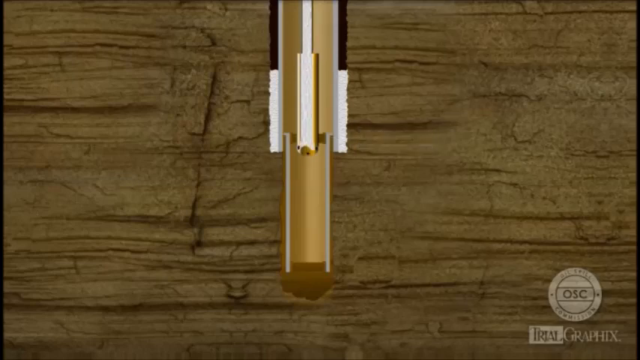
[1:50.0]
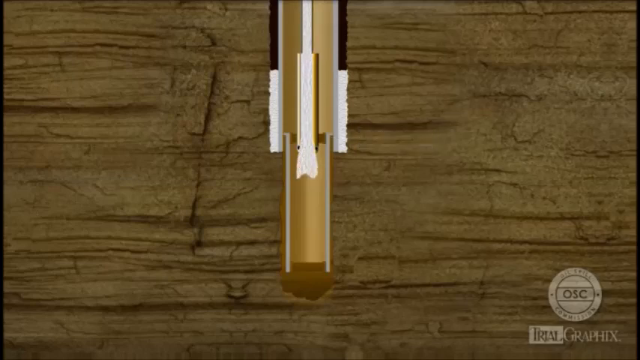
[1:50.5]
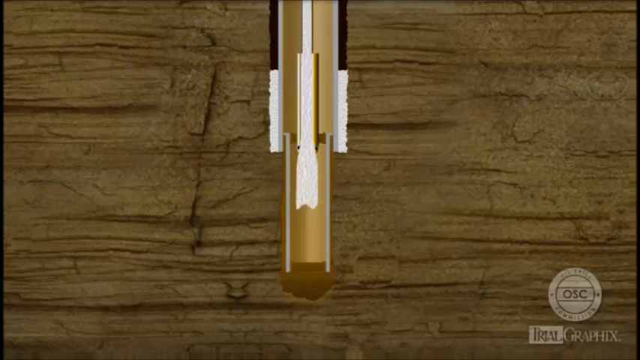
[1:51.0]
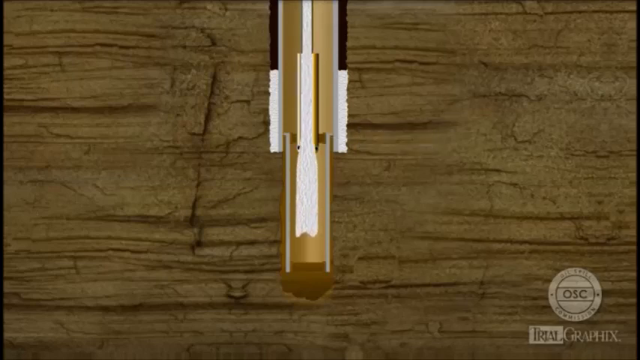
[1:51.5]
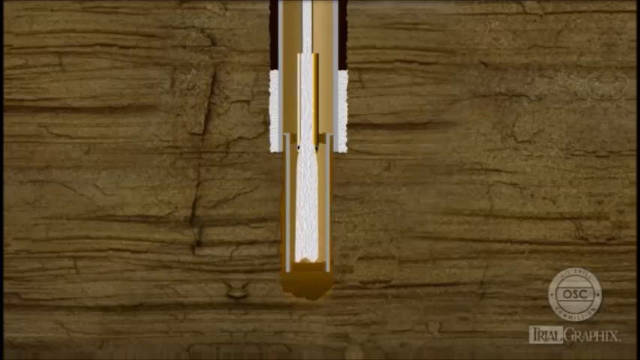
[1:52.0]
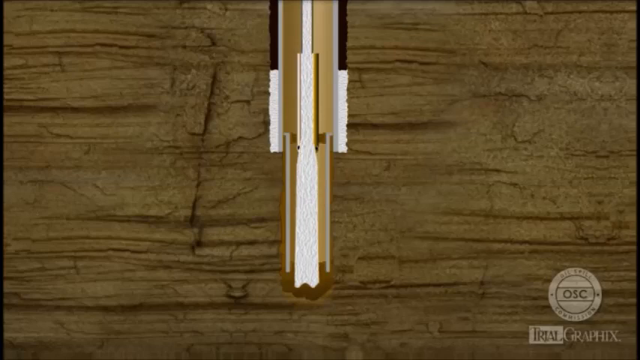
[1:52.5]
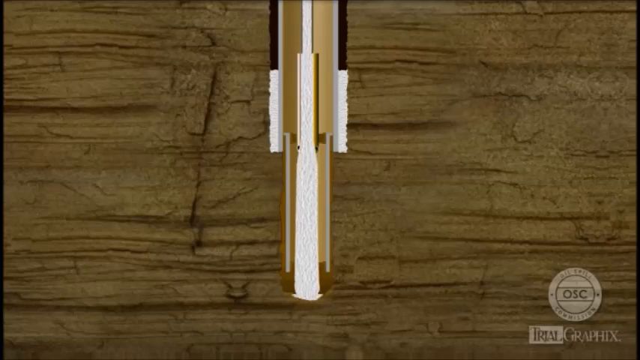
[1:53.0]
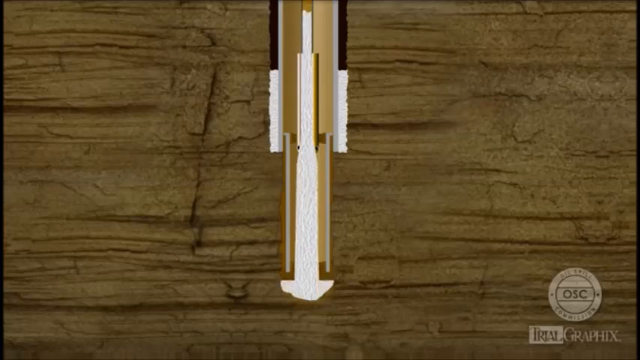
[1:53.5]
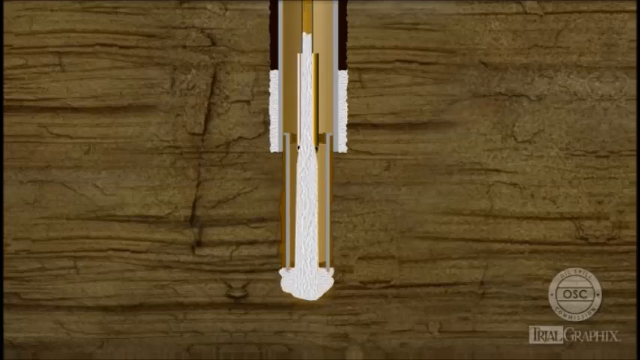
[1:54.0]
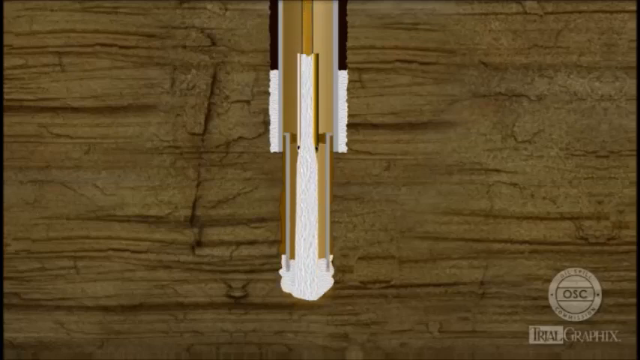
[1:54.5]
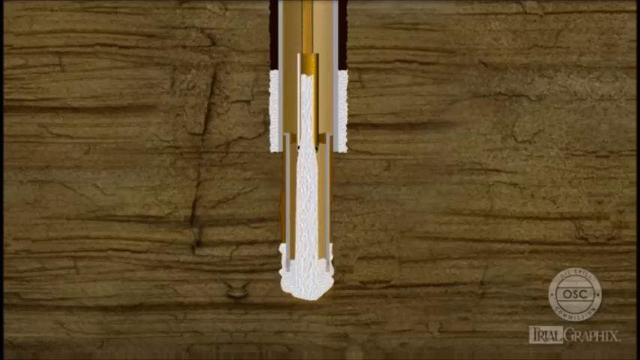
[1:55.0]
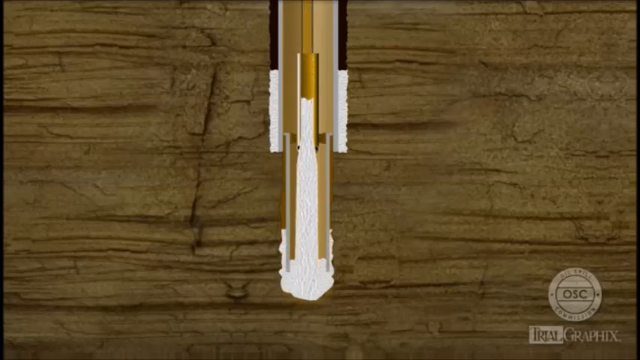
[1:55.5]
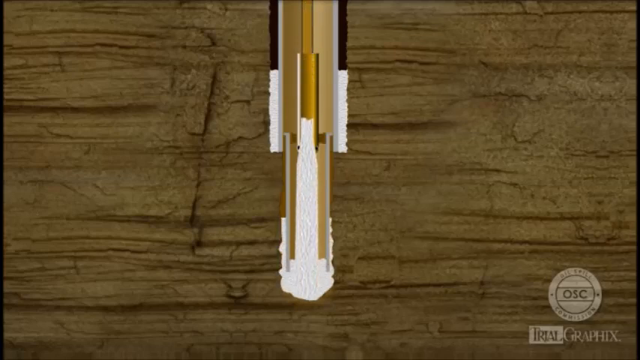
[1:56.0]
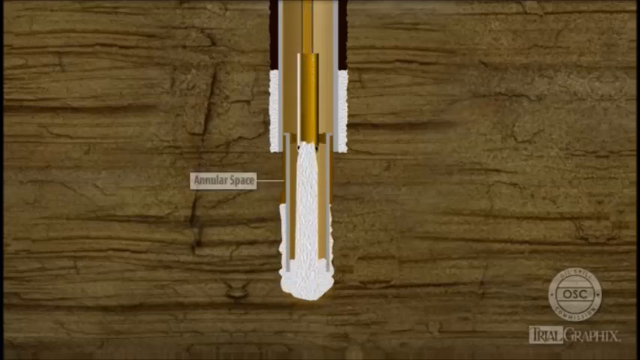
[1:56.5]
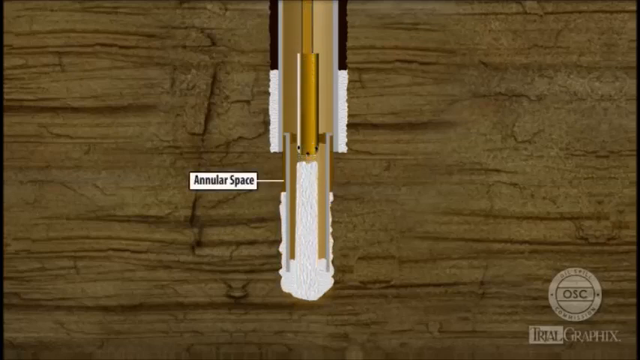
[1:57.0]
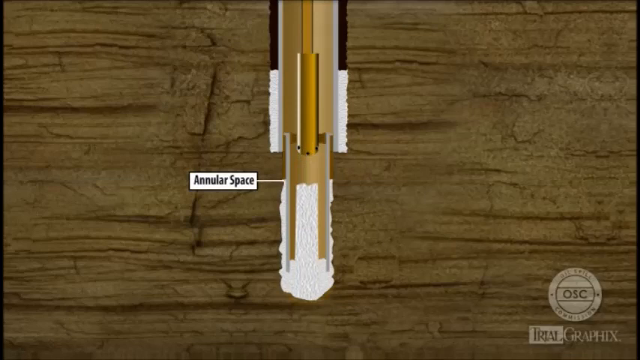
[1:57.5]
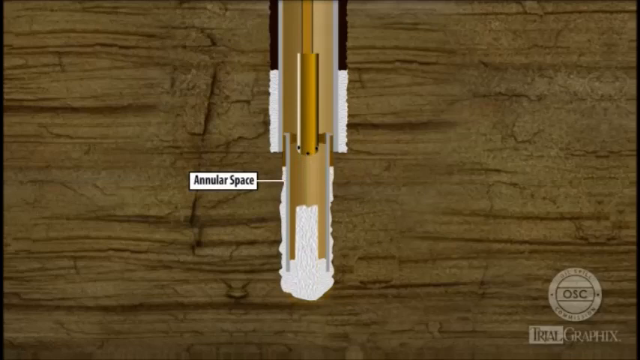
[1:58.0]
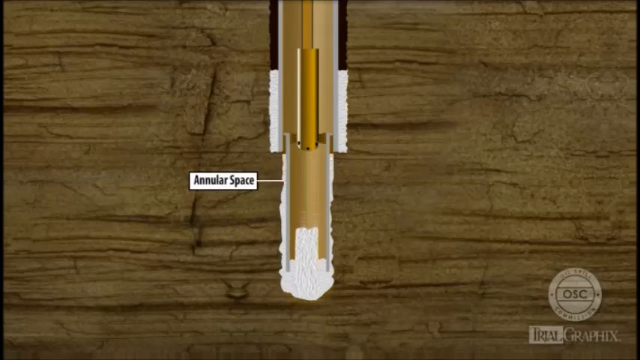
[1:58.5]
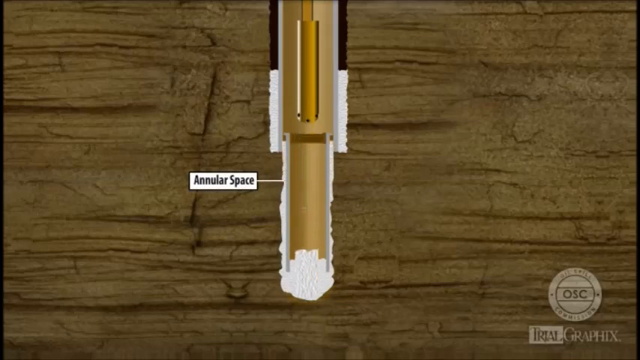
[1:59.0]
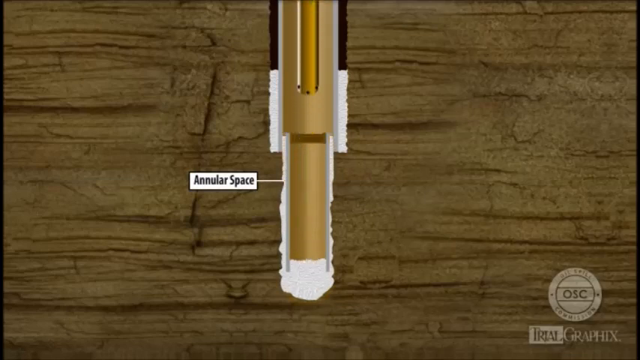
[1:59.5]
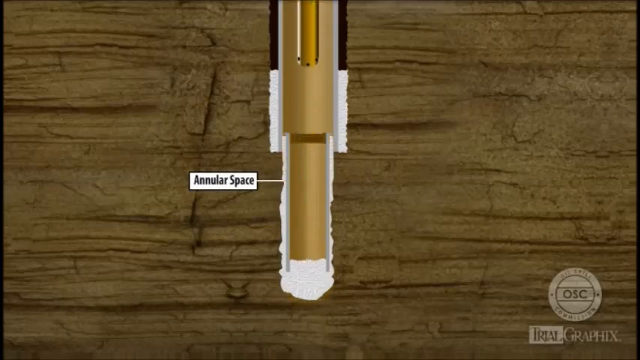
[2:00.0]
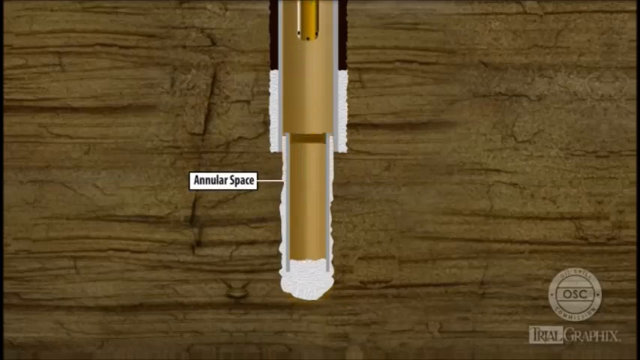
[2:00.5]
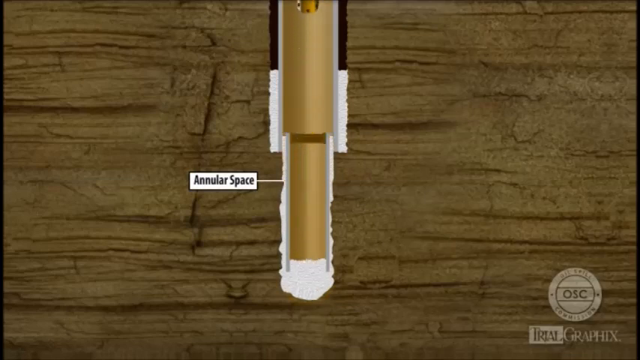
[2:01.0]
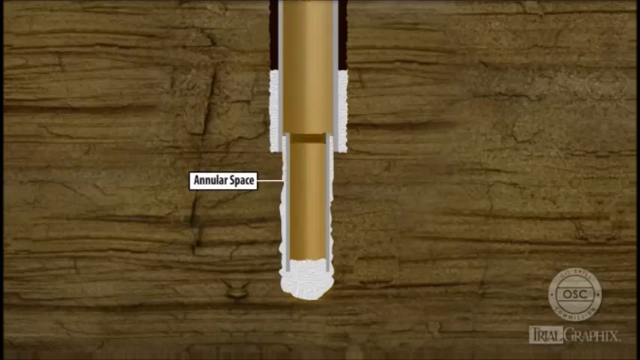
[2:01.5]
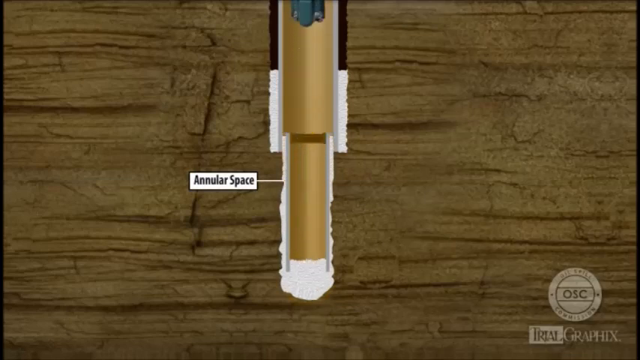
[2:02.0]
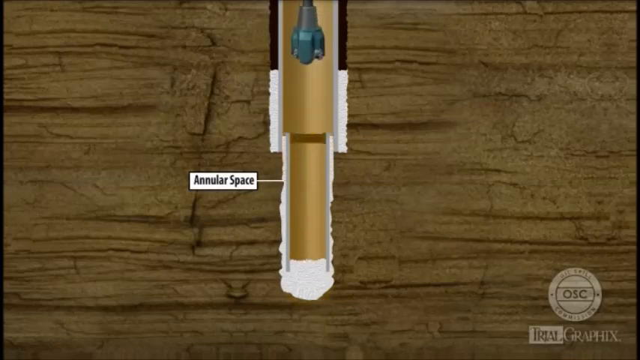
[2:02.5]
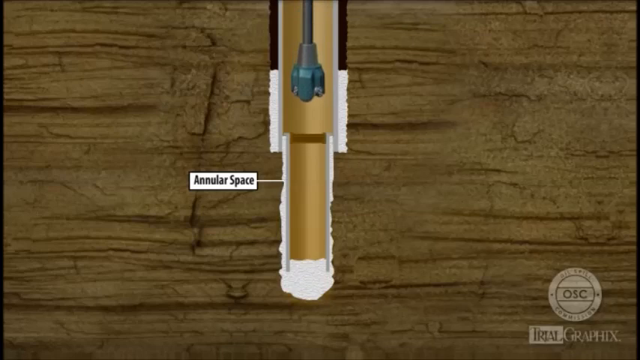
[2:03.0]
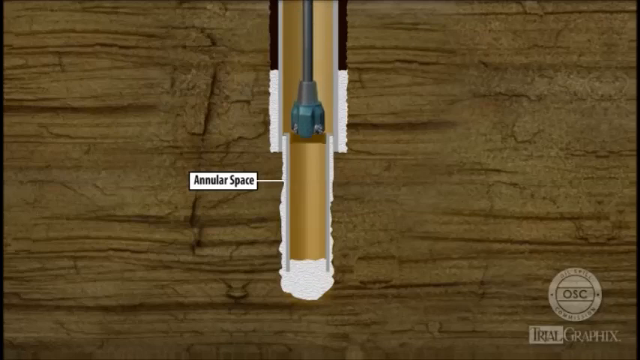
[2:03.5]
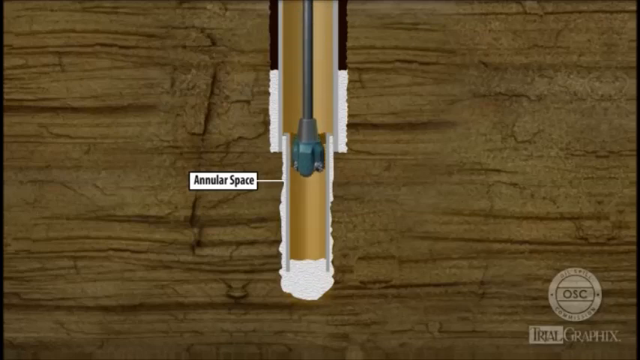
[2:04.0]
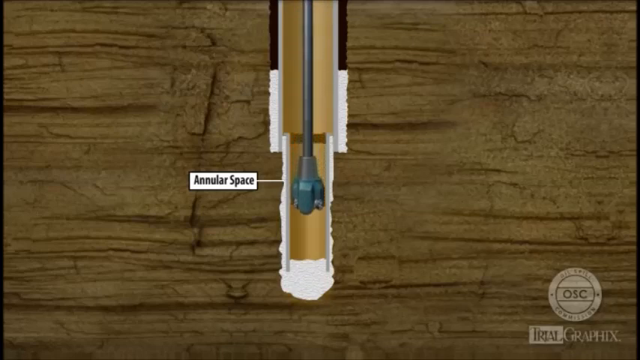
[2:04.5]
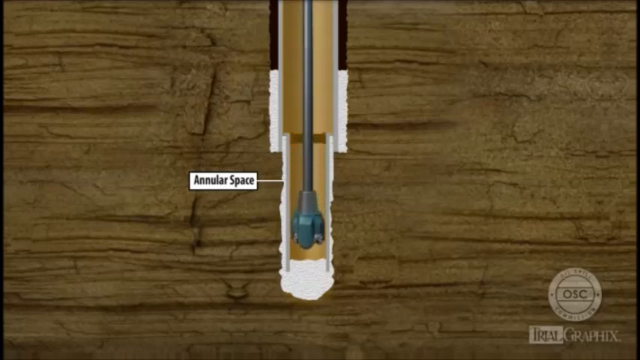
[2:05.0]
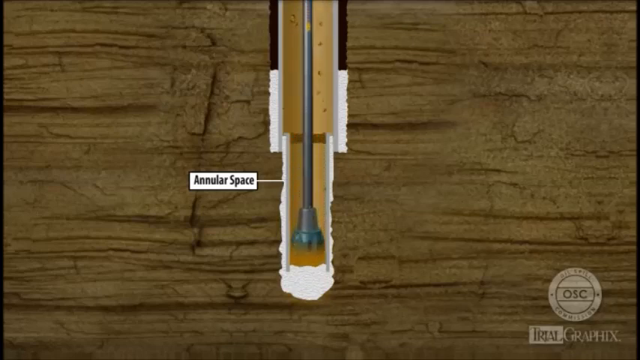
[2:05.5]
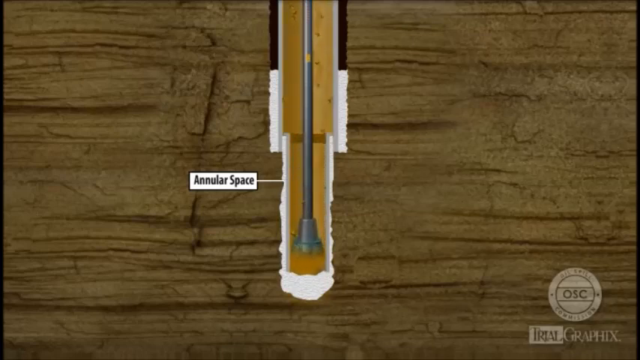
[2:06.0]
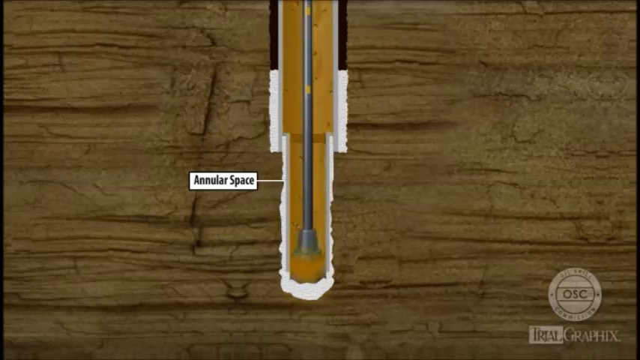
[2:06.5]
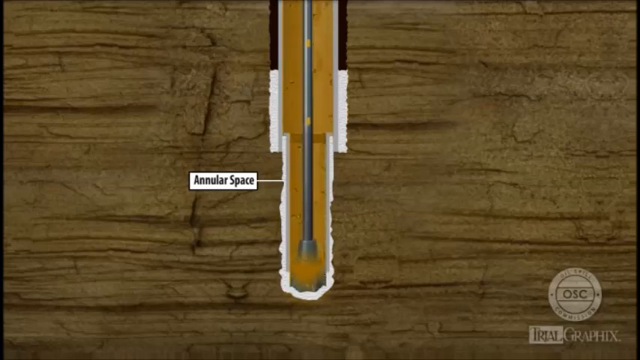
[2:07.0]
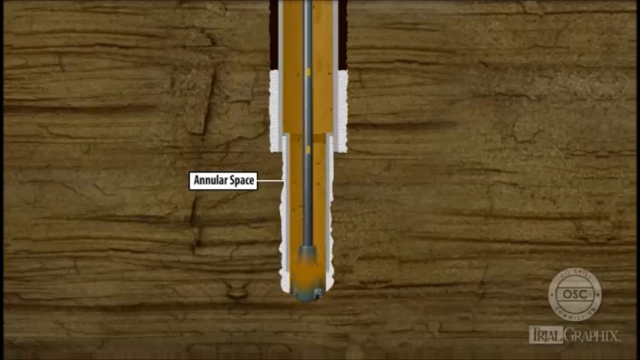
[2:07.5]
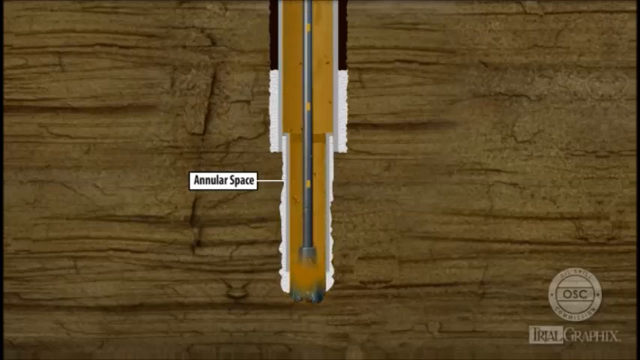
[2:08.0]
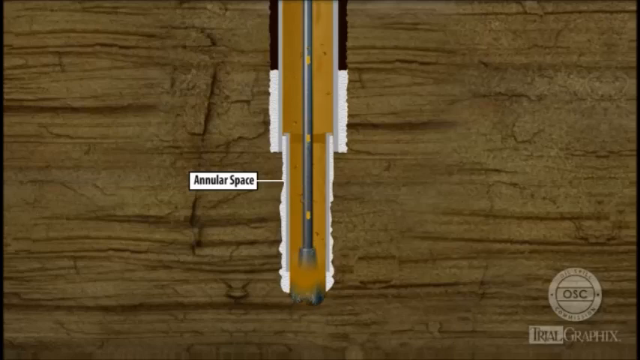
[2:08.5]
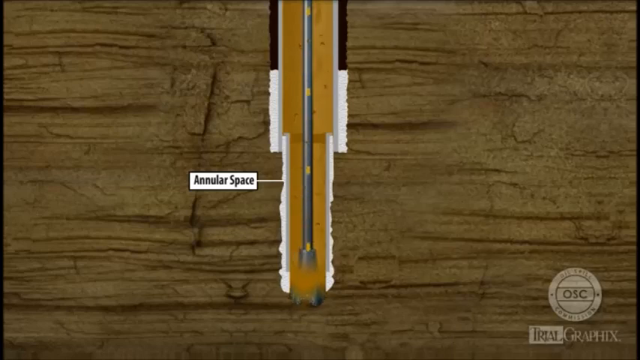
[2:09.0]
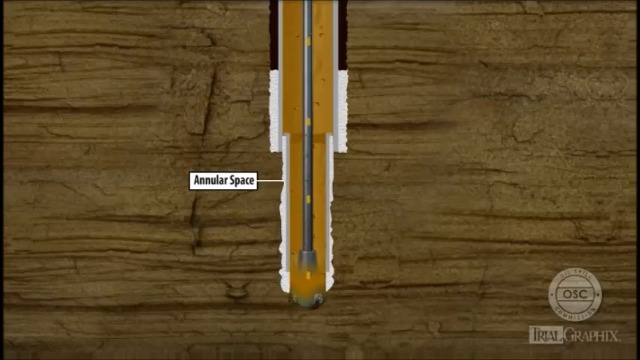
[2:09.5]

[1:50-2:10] A tool is in the hole the drill made in the block of wood. A white substance, rough in texture, flows down the tool, and the flow continues toward the outside of the hole. The words "annular space" appear in black font on a white rectangular background to the left of the hole. The tool, gold in color, moves up and out of frame, and then the gray drill comes down into the same hole and drills downwards, removing the white substance that was placed there. Gold particles flow down within the drill. At the bottom right is the beige "OSC" within a circular structure, possibly the logo of the broadcasting station.